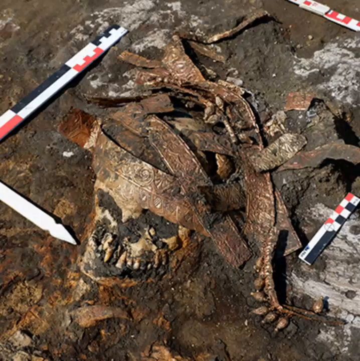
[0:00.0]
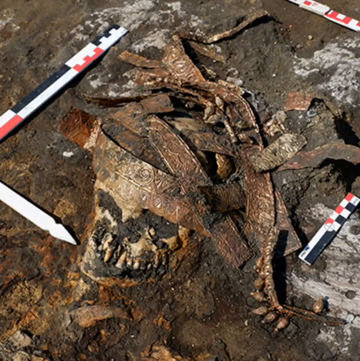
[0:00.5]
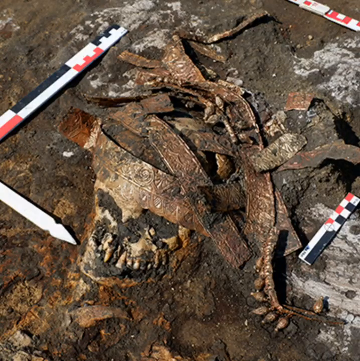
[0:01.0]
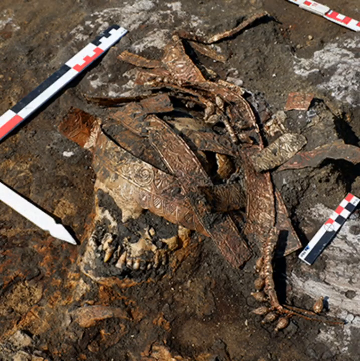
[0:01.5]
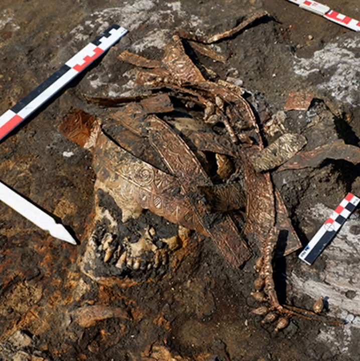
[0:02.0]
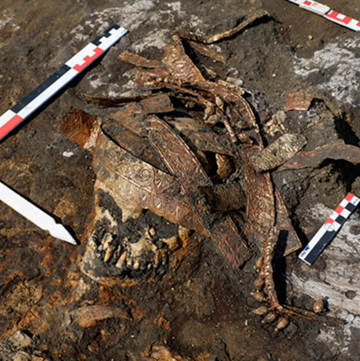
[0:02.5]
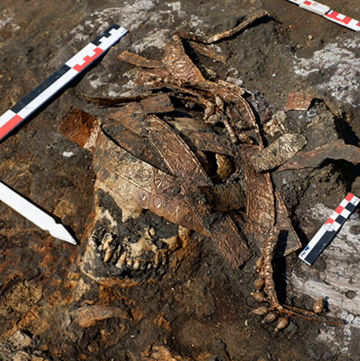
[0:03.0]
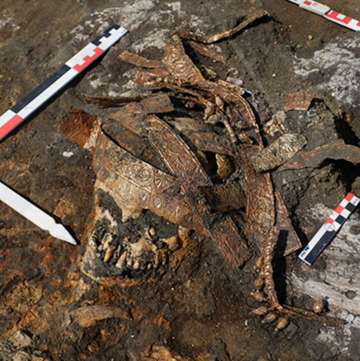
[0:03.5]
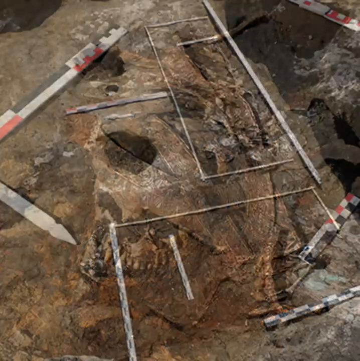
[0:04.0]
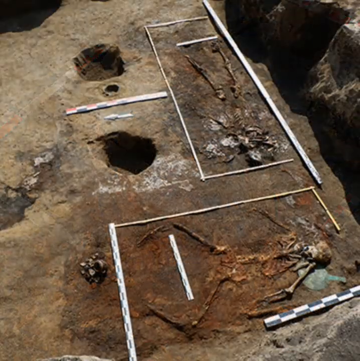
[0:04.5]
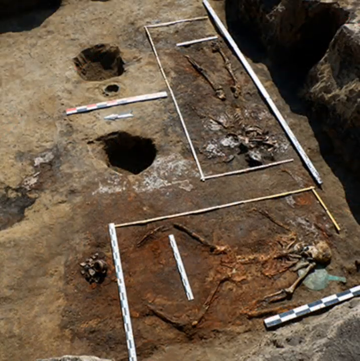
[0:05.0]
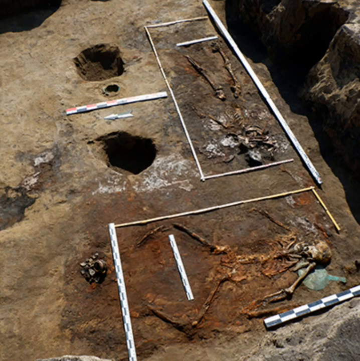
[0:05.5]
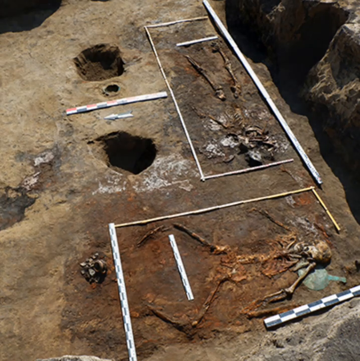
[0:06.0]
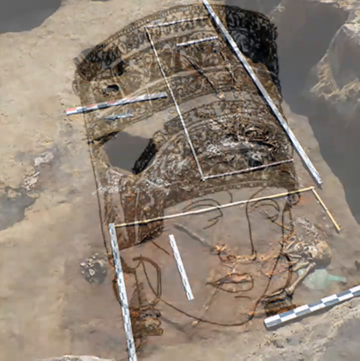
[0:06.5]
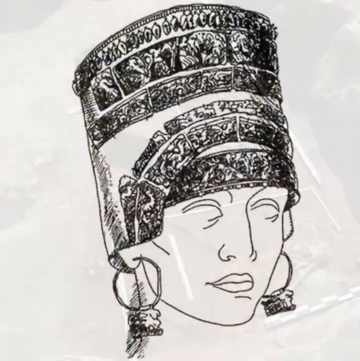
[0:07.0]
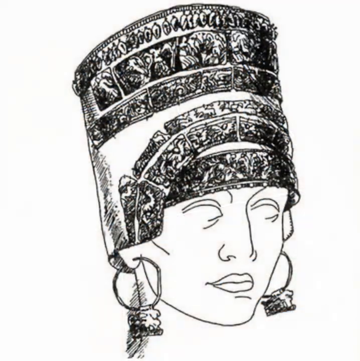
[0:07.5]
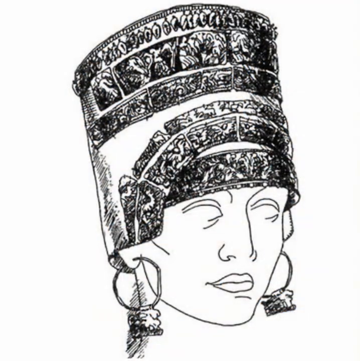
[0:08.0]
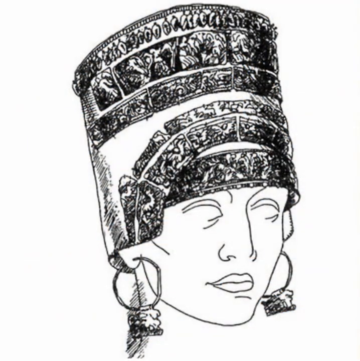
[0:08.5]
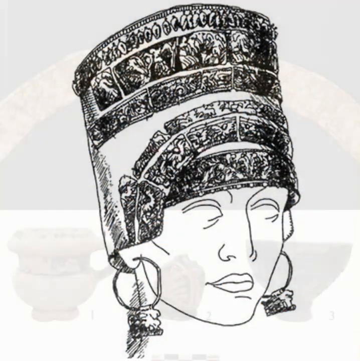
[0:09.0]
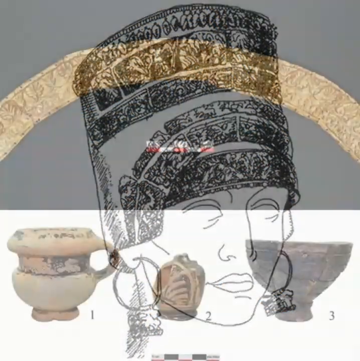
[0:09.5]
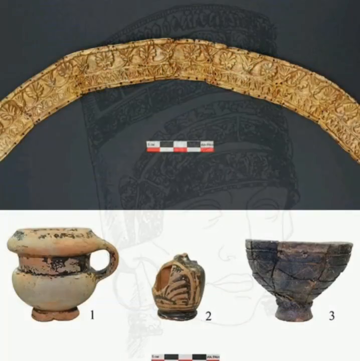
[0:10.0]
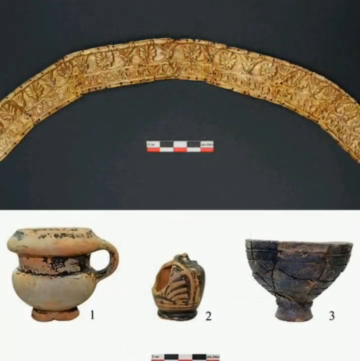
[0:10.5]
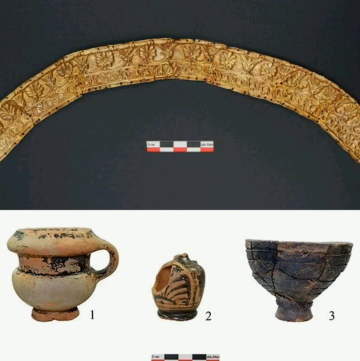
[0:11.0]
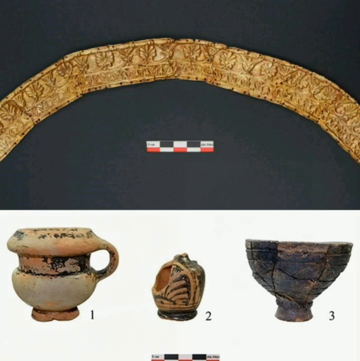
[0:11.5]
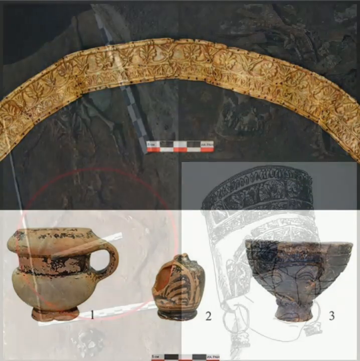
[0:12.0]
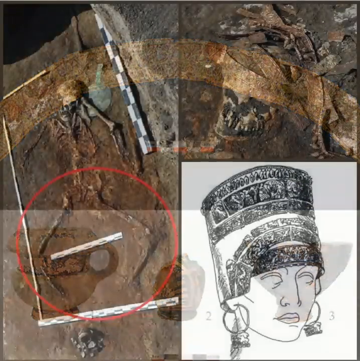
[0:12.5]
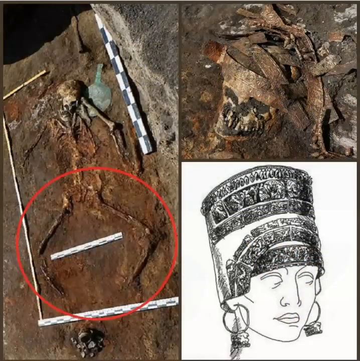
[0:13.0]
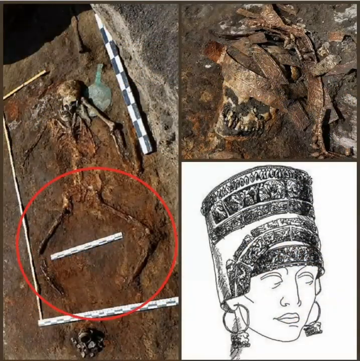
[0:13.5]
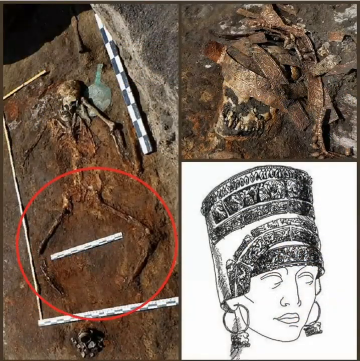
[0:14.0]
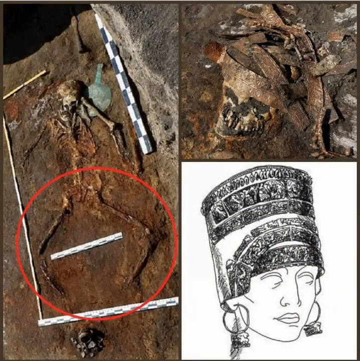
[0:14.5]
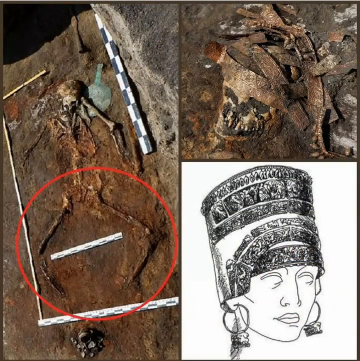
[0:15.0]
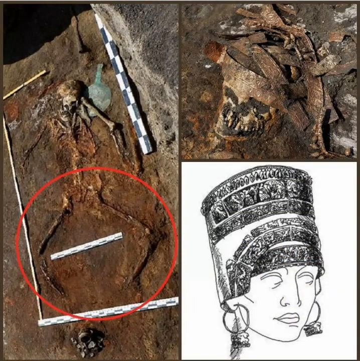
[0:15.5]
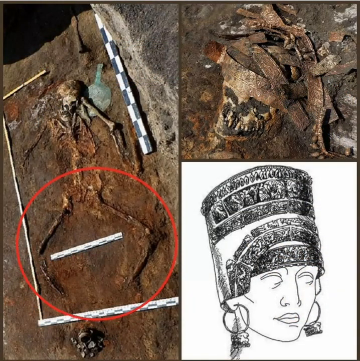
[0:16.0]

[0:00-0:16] The video shows an archaeological dig with two skeletons lying perpendicular to each other, one running left to right and the other from top to bottom. Both have sticks showing the distance between the knees, and one seems to be lying with its knees at a strange angle. The archaeologists have put markings around both of them, and they are in some sort of grave; a marker shows the distance and the length of what is left of the bodies. The video then changes to a lady who is a historical figure. She wears large round hooped earrings and a ceremonial headpiece, which may or may not have been a piece of armour, decorated all the way around with pictures of flowers, battles, scenes and angels. Several other things found at the dig are then shown, including a pot, some sort of bowl, and an archway, each of them labelled. It appears that the skeletons, the headpiece, the bowls and all of these items were found in the dig.